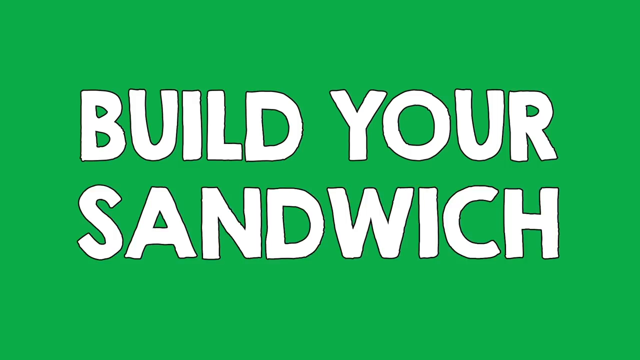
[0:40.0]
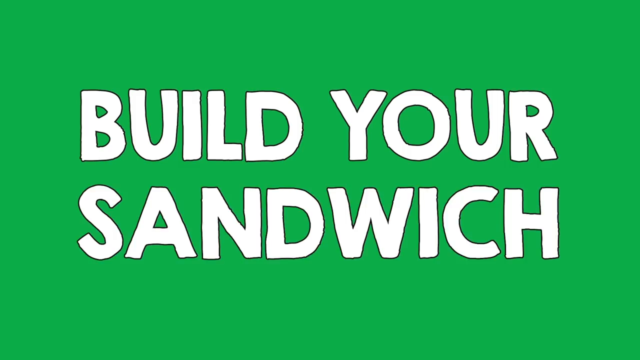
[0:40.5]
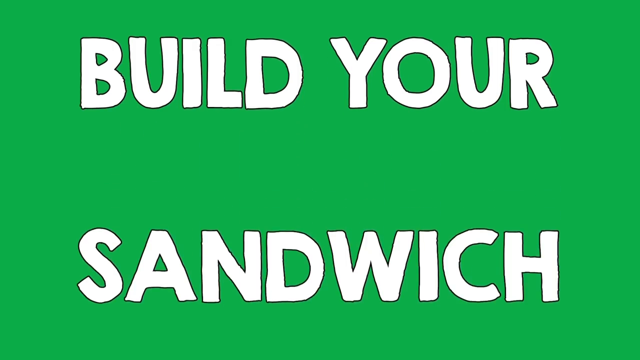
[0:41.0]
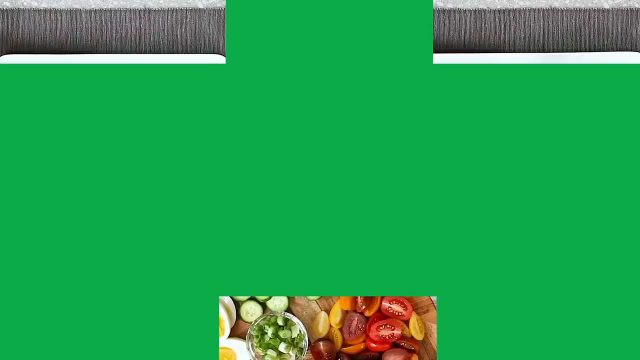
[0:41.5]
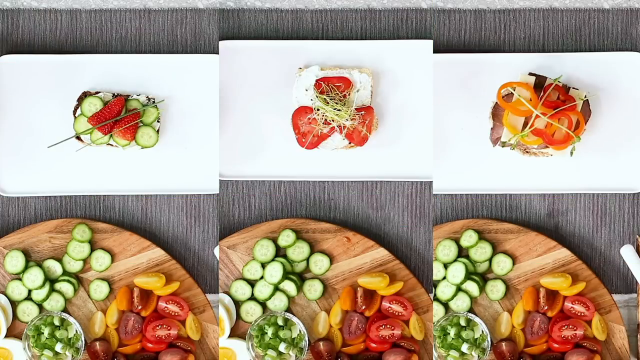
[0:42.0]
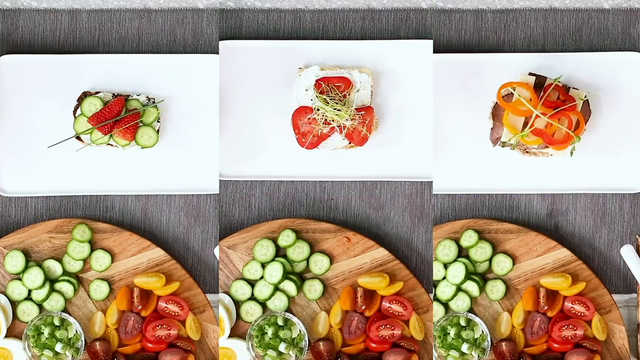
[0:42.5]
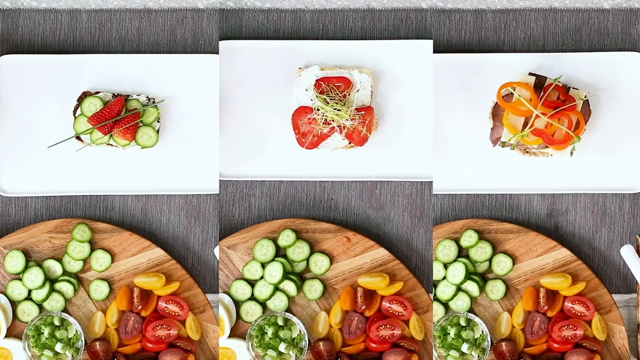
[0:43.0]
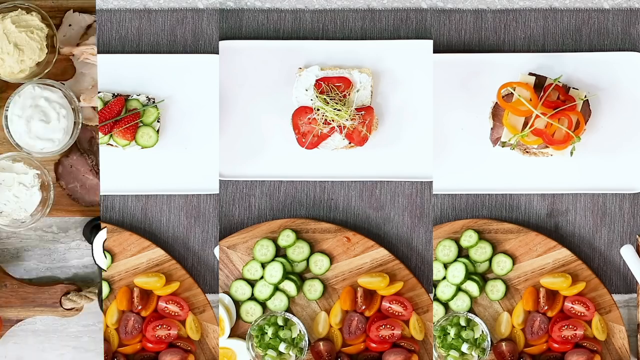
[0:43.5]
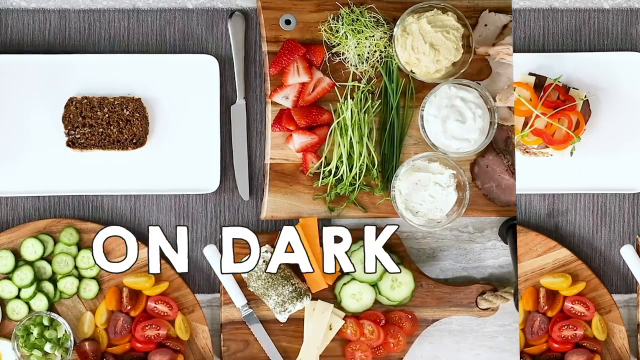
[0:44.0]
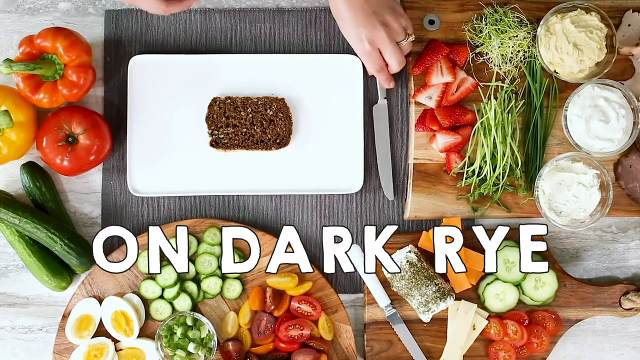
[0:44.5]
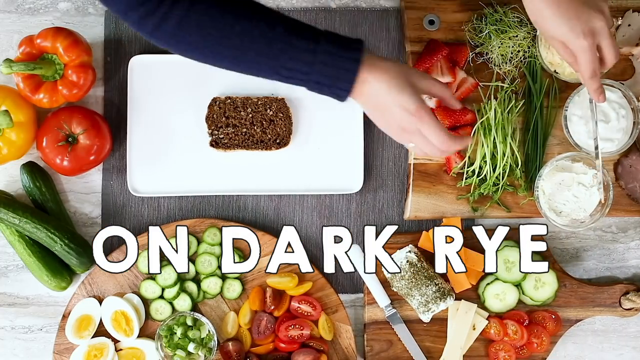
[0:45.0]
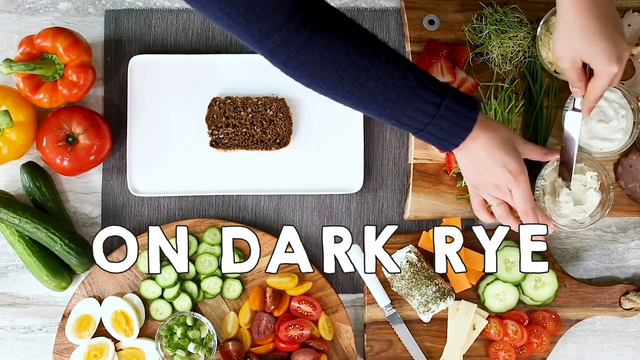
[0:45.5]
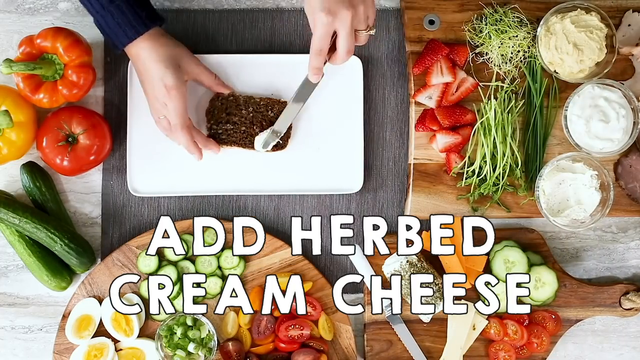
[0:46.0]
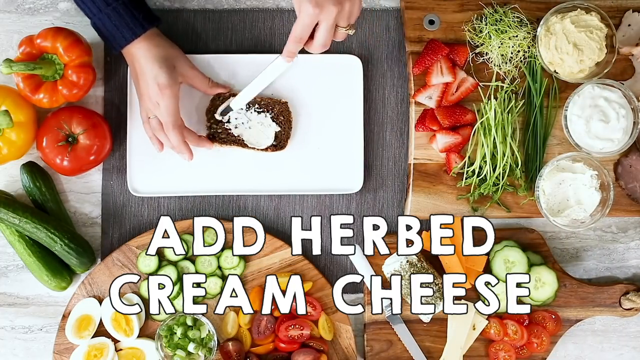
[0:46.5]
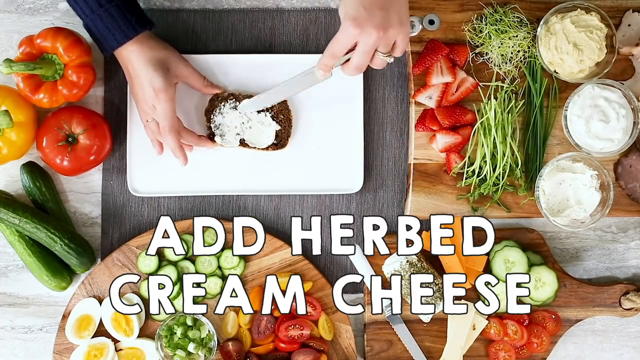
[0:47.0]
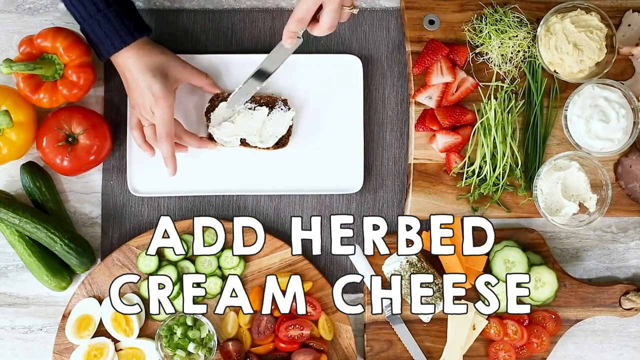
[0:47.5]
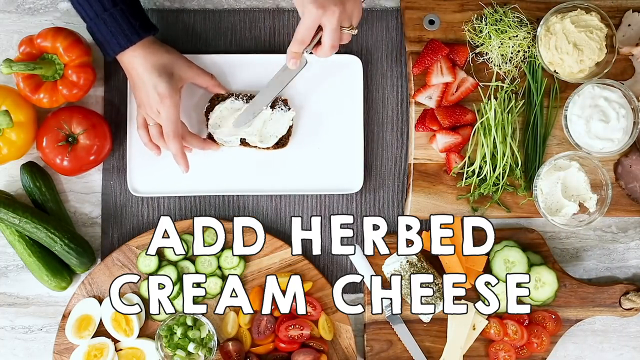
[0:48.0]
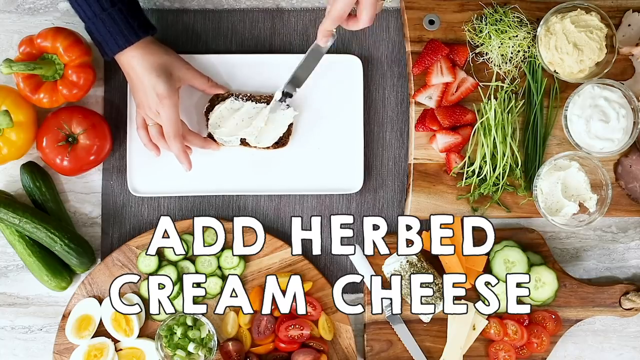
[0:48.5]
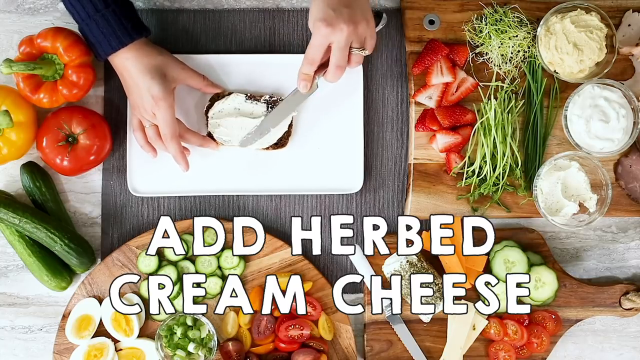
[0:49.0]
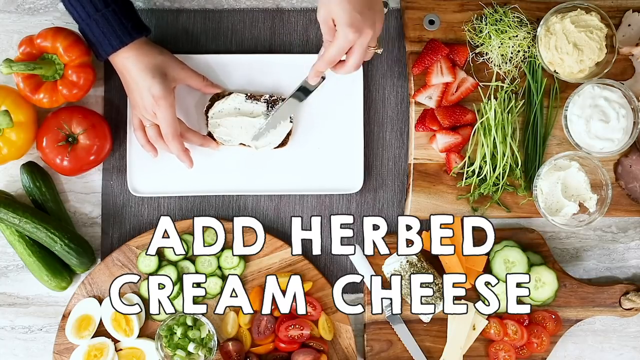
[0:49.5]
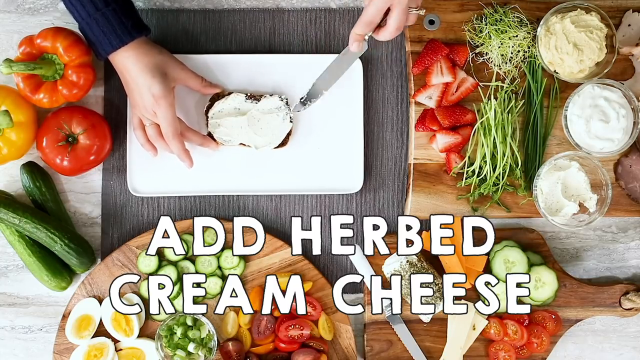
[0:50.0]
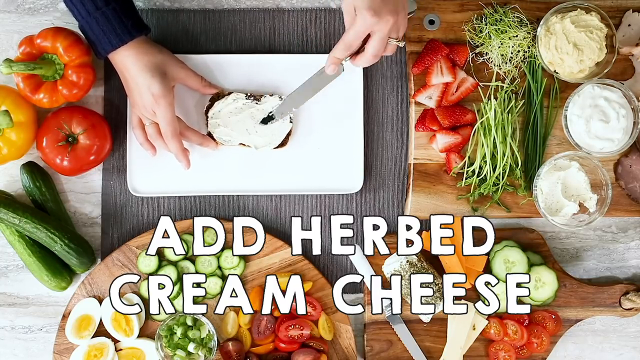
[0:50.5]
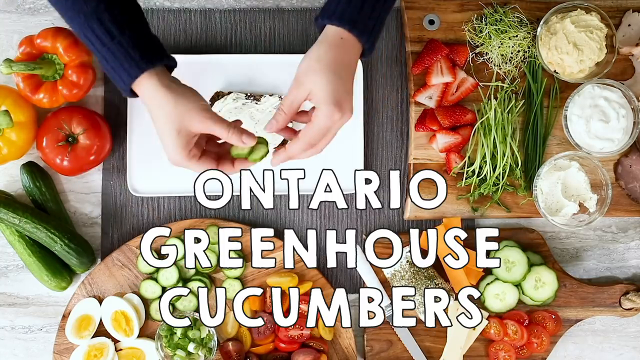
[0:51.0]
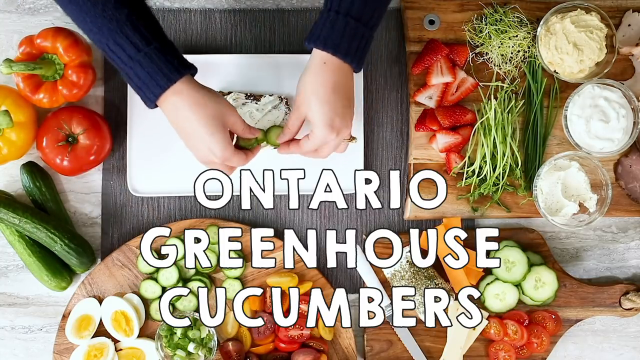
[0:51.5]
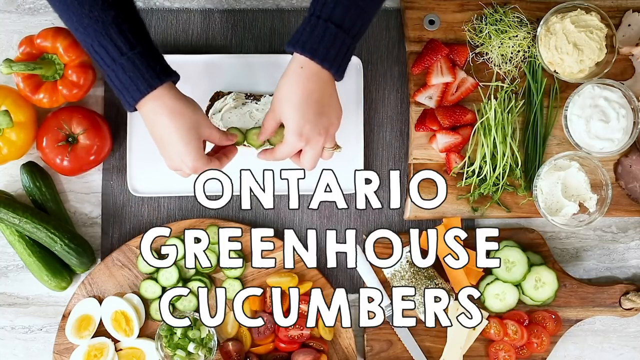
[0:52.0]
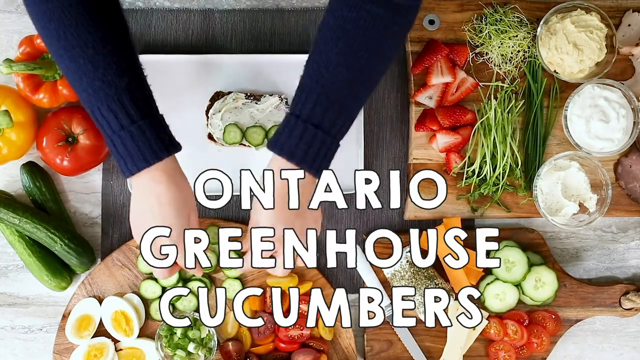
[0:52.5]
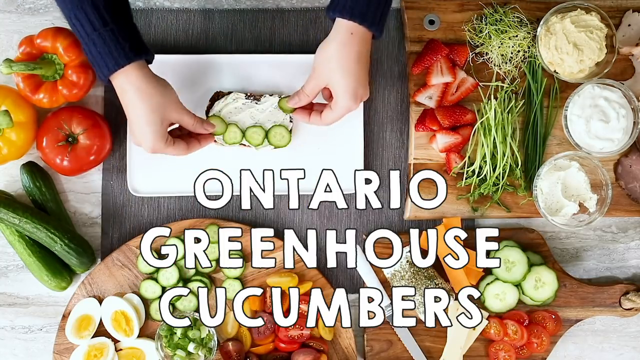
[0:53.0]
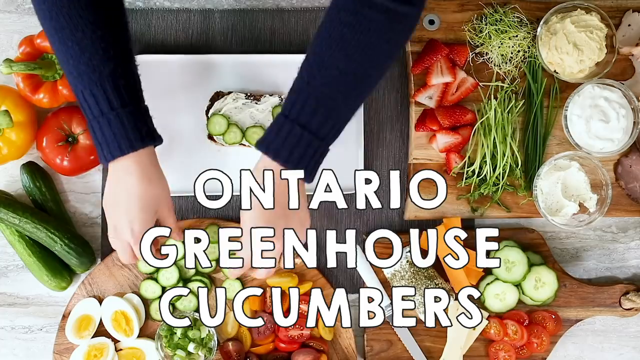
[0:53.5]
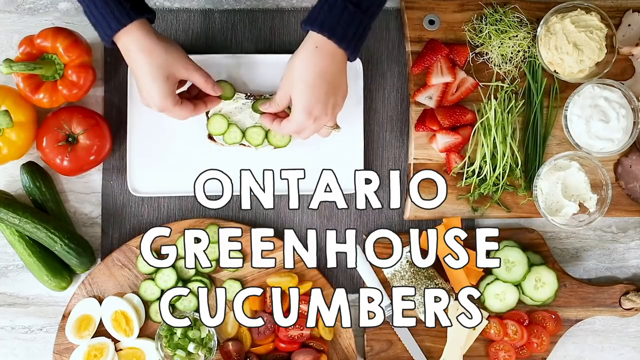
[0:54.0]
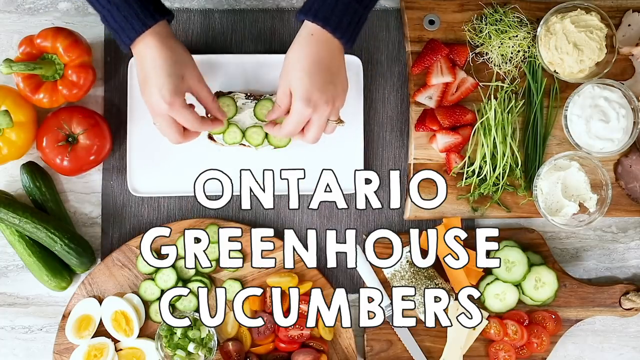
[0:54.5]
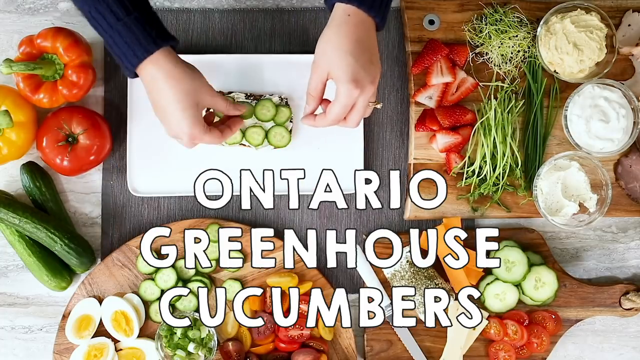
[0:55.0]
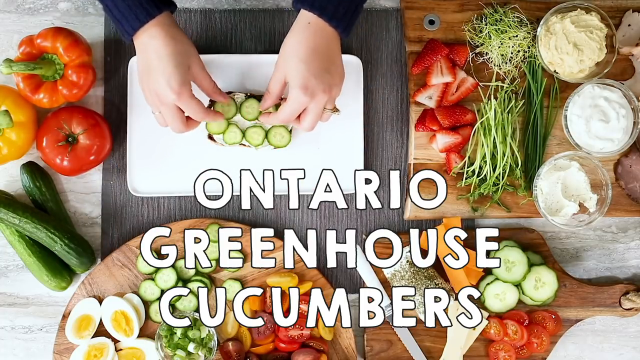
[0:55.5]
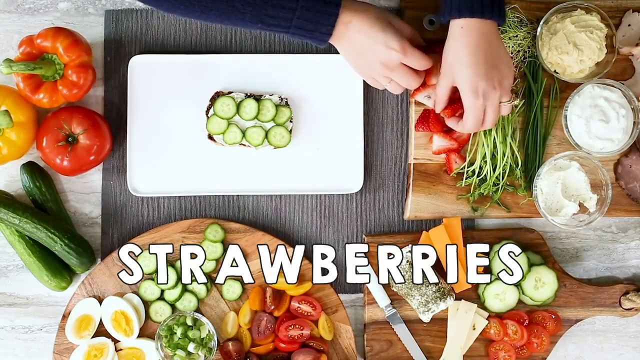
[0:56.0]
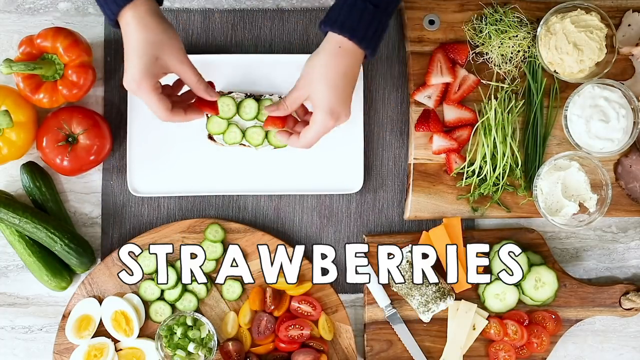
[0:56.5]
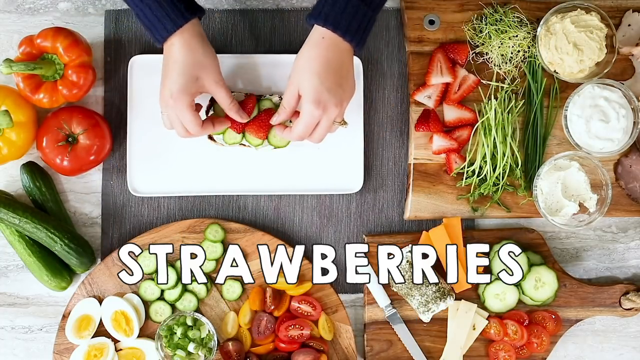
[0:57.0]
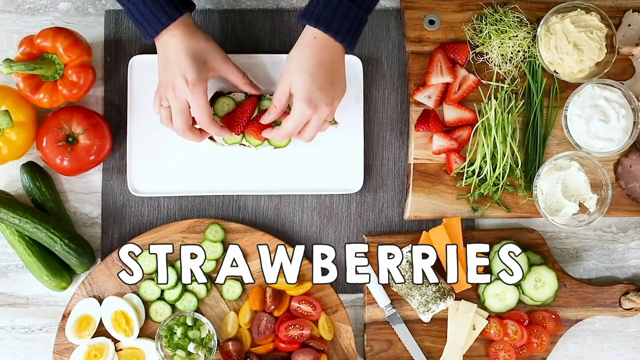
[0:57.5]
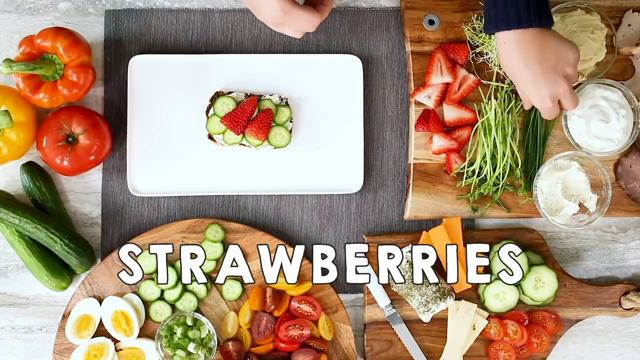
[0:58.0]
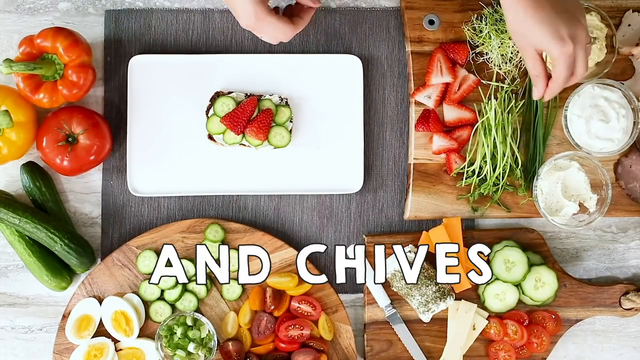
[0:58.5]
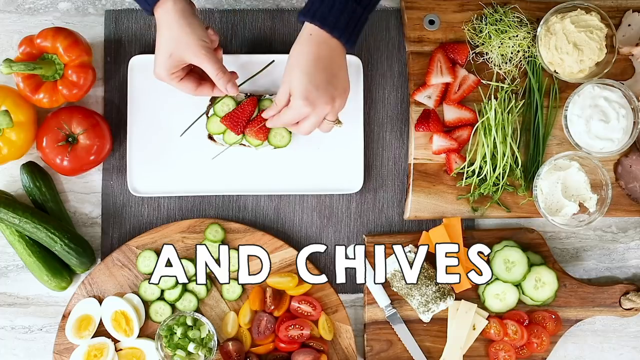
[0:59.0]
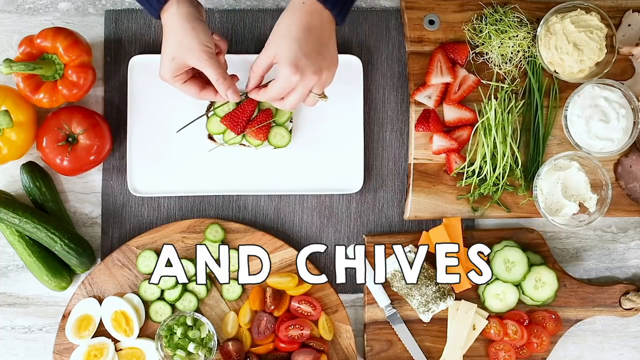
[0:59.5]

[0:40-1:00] The sandwich building begins on a table holding different kinds of already chopped fruits. On dark rye, she applies herbed cream cheese, then puts Ontario greenhouse cucumbers on the sandwich, places some pieces of strawberry in the middle, and then adds some chives, putting some roots of chives on top.